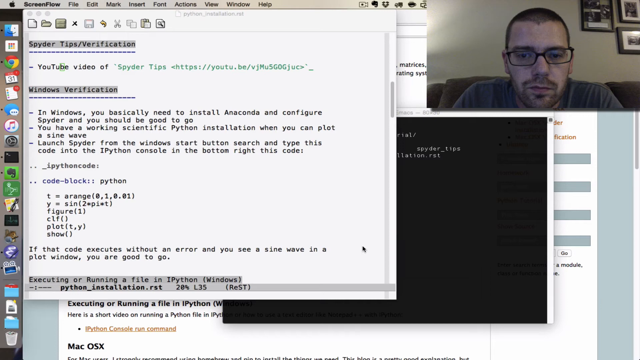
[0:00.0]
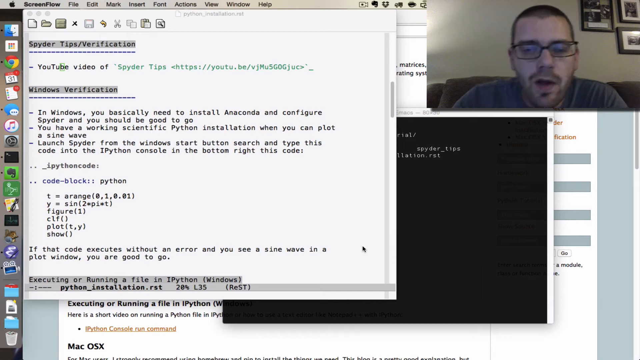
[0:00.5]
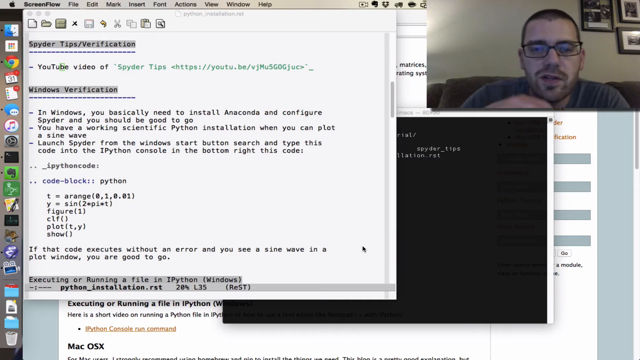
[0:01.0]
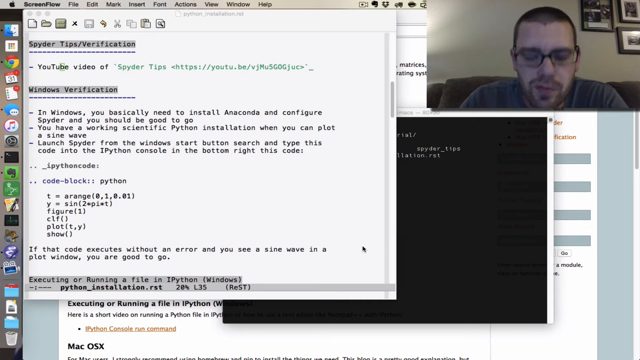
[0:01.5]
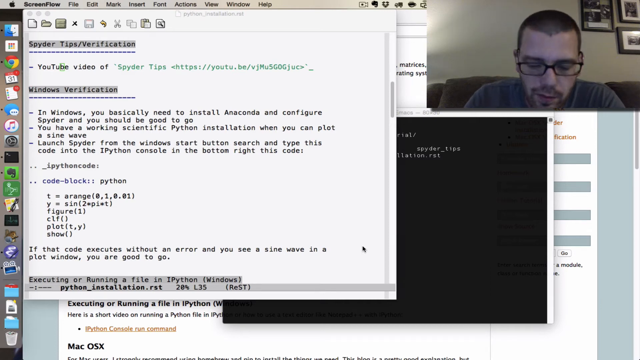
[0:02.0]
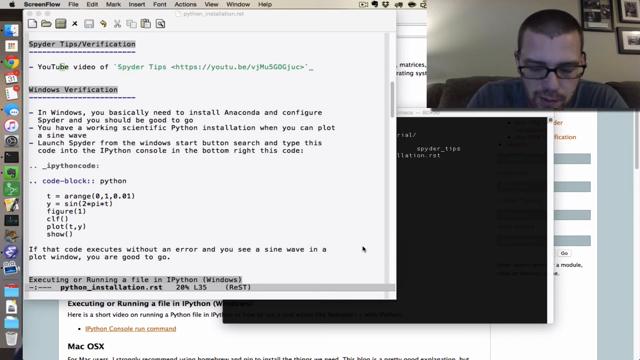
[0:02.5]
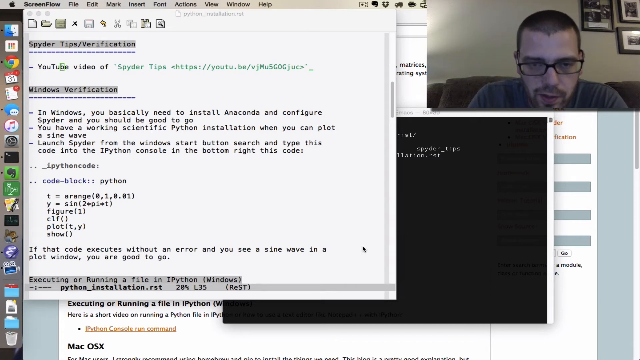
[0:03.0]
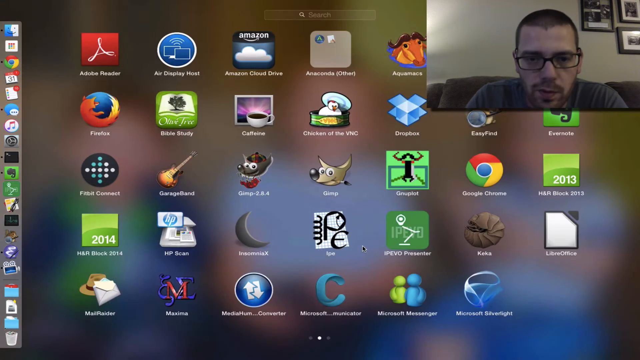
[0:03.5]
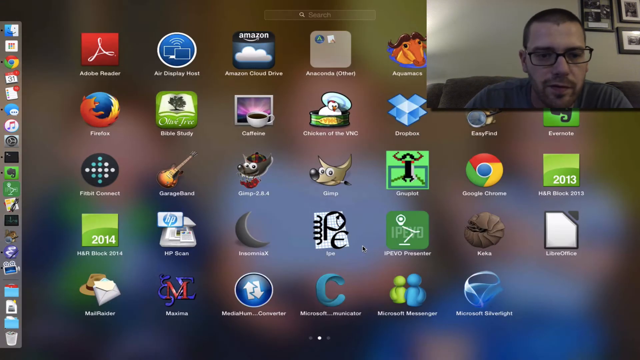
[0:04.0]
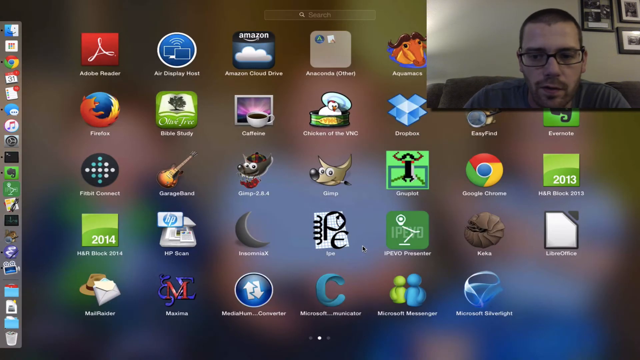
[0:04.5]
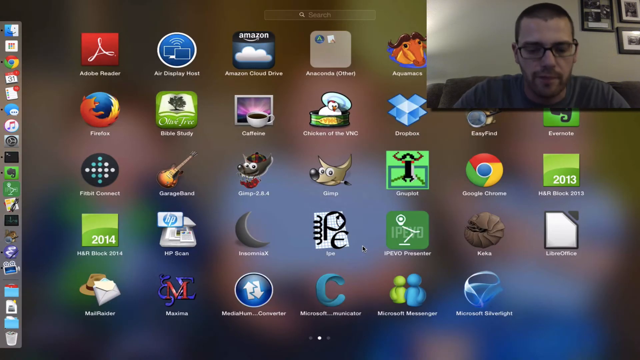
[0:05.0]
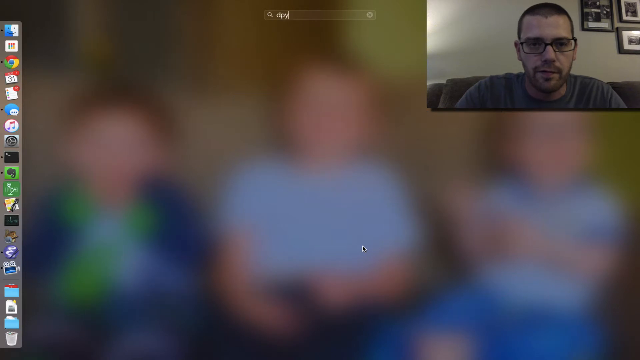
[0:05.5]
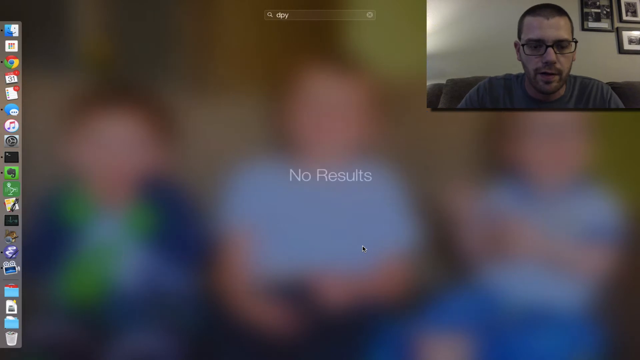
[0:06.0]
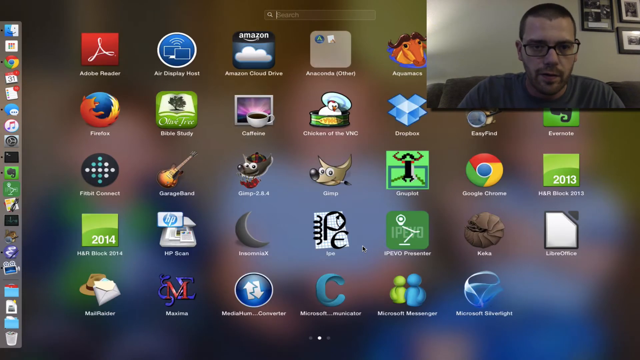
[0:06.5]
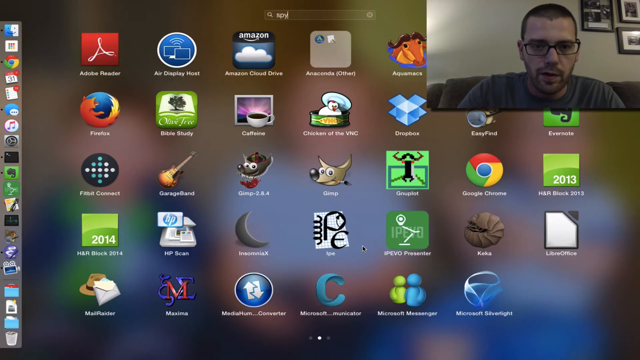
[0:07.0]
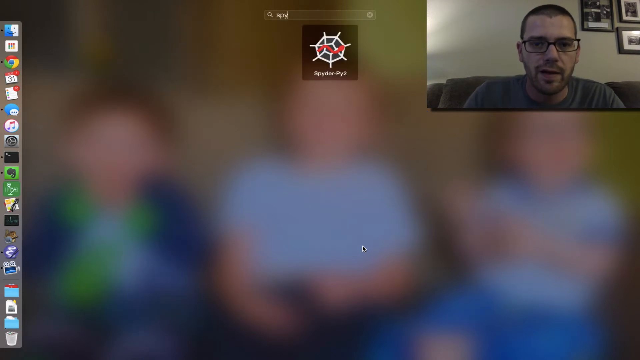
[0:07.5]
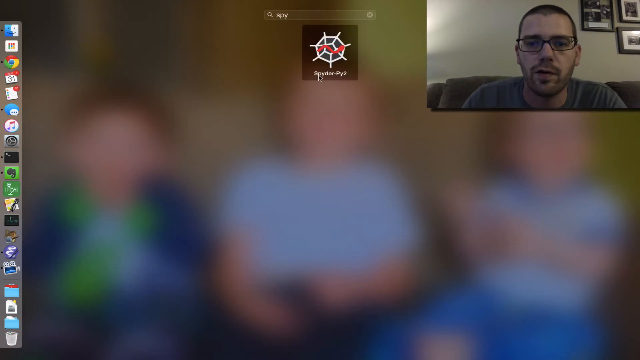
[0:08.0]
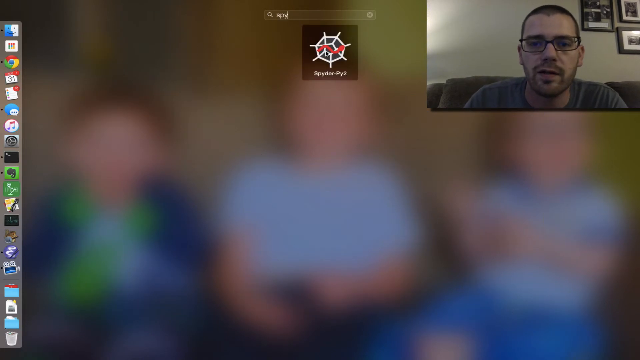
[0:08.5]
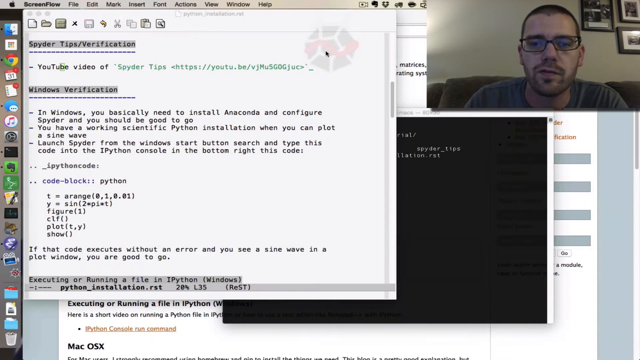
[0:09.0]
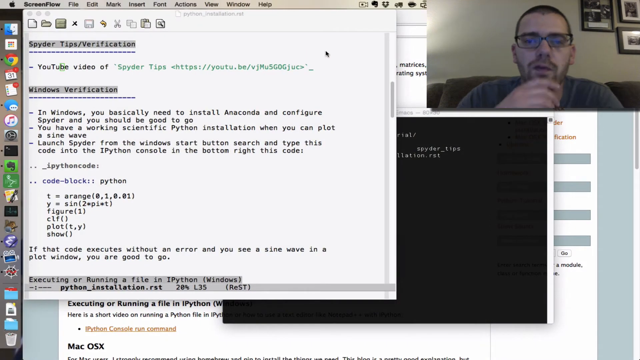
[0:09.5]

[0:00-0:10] A man appears to be making some kind of video, seemingly as a tech geek of sorts. At the top right of the screen is a thumbnail video of him; he appears to be sitting on a sofa, wearing glasses, with a little facial hair. There are a few pictures on the back wall to his far left, and the couch is brown. He appears to be working on a Mac, since an apple shows at the top along with ScreenFlow. At the start the screen shows "Spyder tips verification," with different windows verification and what looks like a series of codes for different functions. Then the view goes to his desktop, which has rows of icons, probably 15 or 20, stacked in a column on the left side, including Google Chrome and a calendar, along with other programs such as Adobe Reader and Firefox. He types "spy" into the search at the top center and clicks on Spyder, and multiple boxes come up, two or three of them. One is Spyder, looking almost like a word document, and there are two others behind it, one with a black pop-up box.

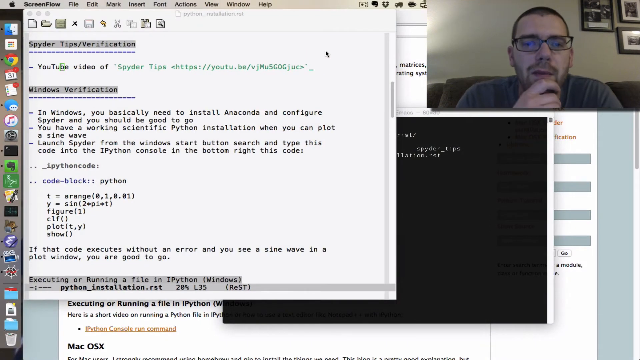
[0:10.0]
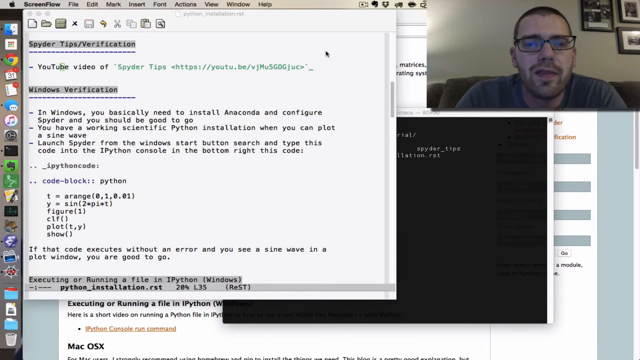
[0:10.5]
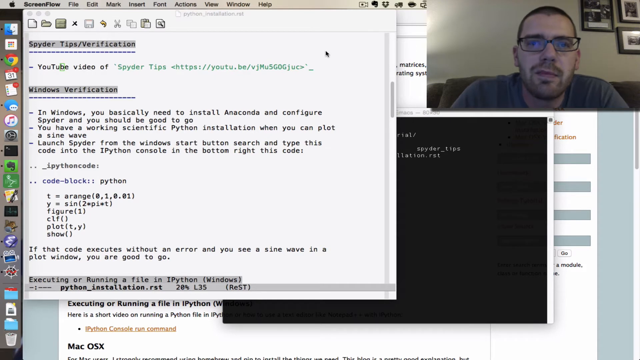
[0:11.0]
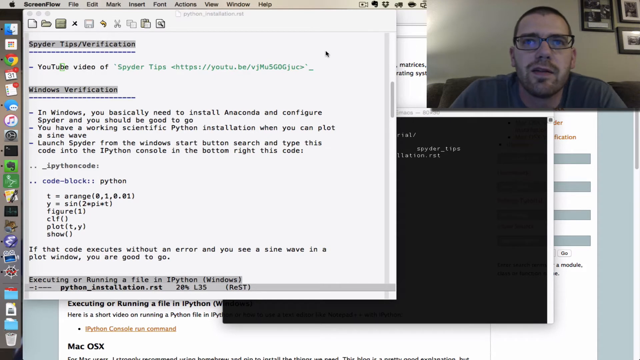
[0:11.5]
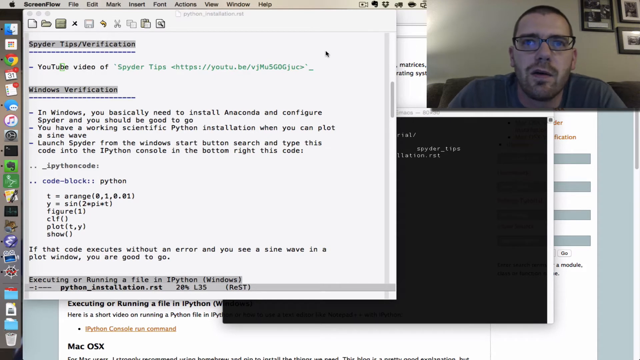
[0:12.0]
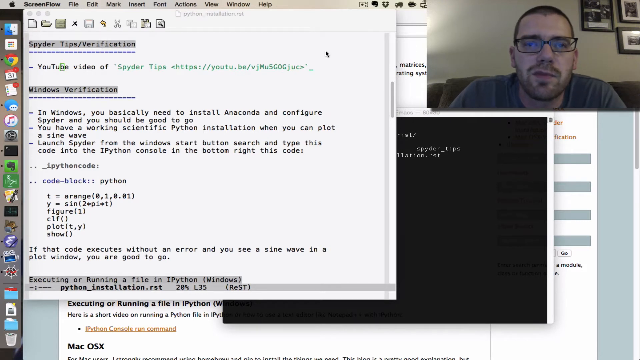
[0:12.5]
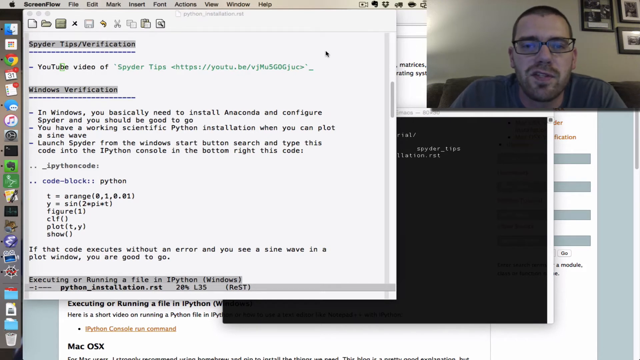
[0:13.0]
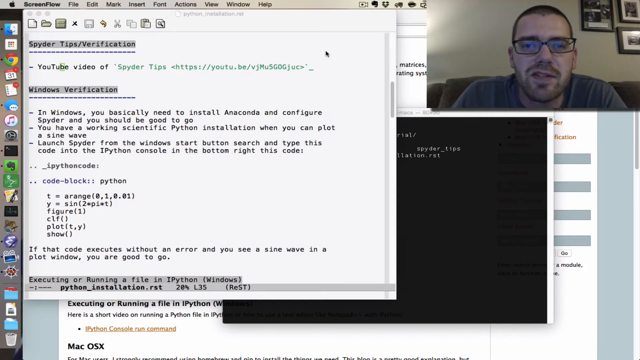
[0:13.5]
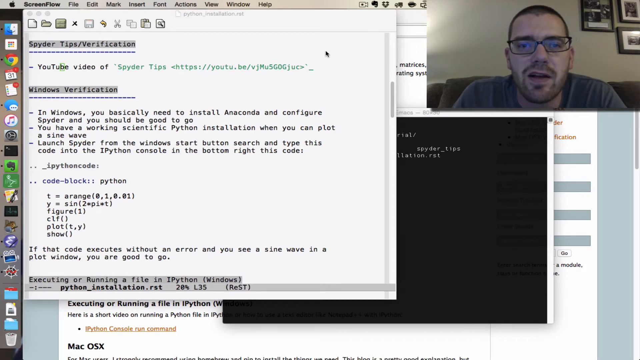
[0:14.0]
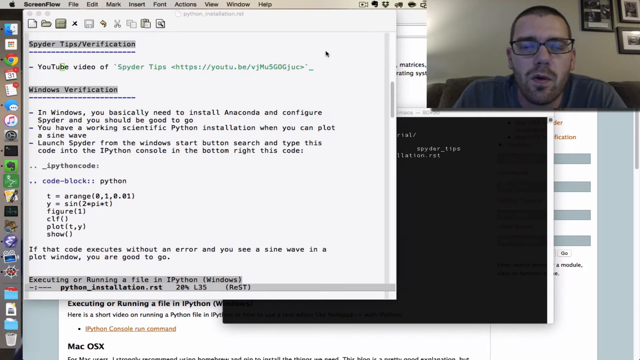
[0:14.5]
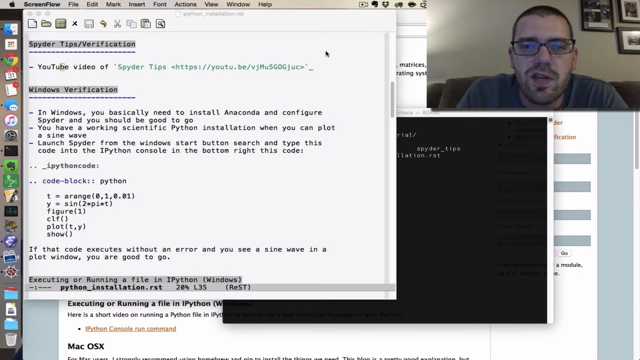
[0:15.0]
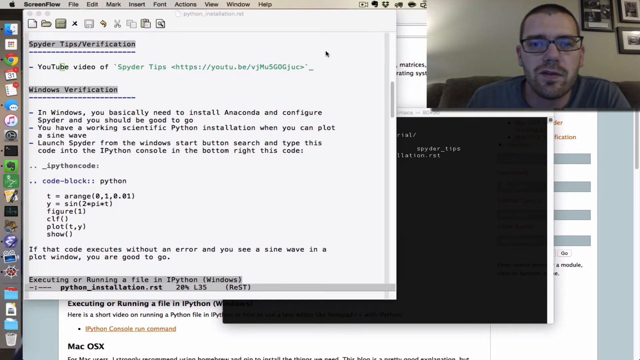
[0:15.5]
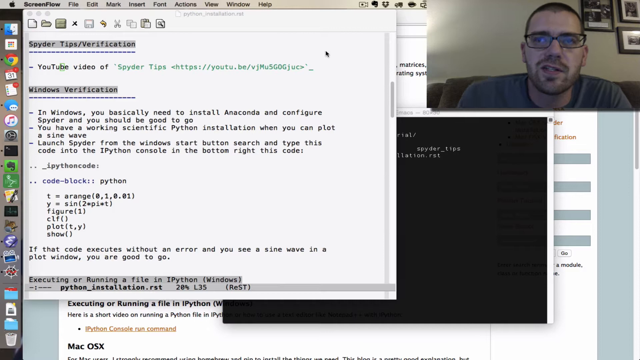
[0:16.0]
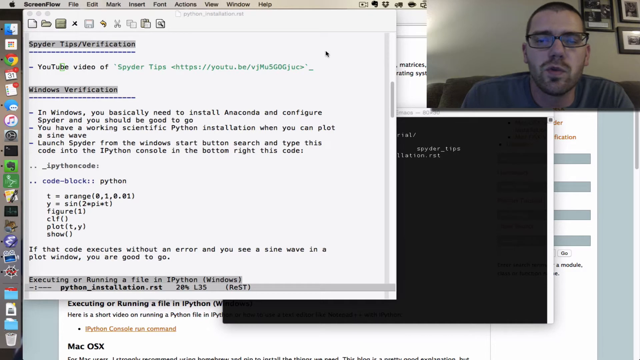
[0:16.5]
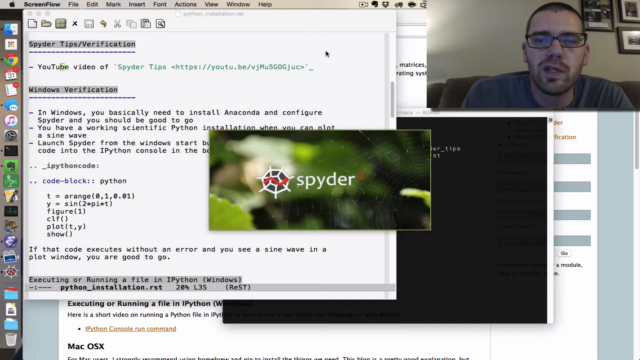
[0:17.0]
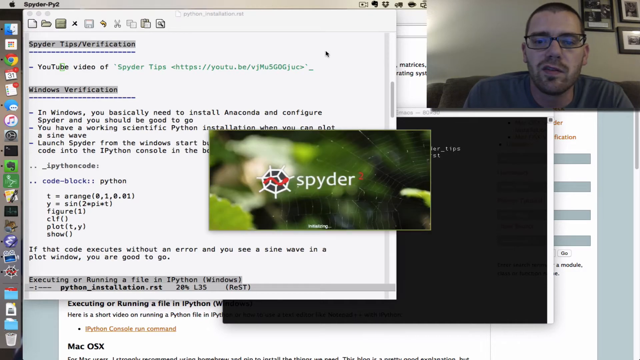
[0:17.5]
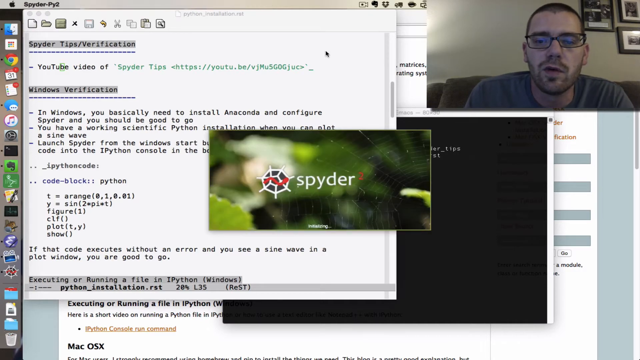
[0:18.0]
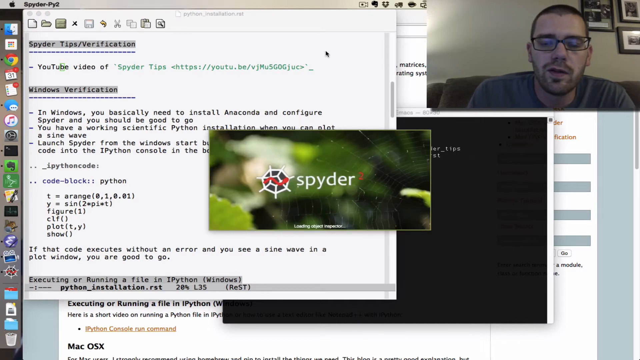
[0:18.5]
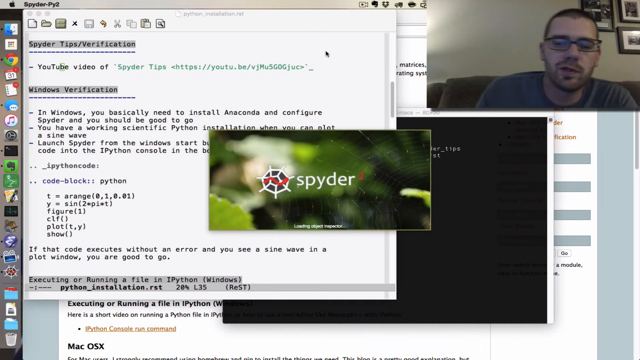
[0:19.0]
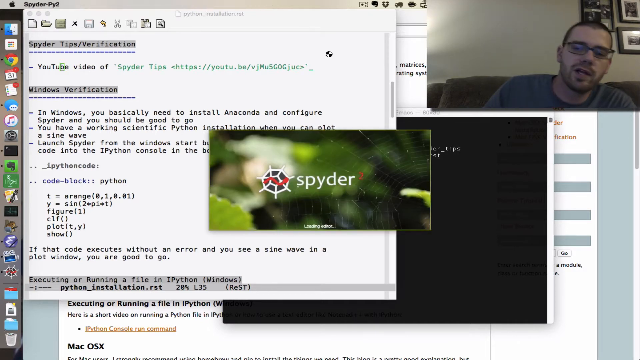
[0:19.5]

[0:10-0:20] He is on a Mac, with the video of him at the top right. The screen says "Spyder tips verification," highlighted in gray, and there is something like an attention notice that says "YouTube video of" followed by an HTTPS address. A Windows verification section has three bullet points with some Python codes. He seems to be some kind of software engineer. He speaks and looks up as if trying to think of what to say. Spyder appears to be loading in the middle of the screen, Spyder spelled with a Y, with a fuzzed-out graphic that looks like it is outside, showing some trees, and an animated white cobweb to the left.